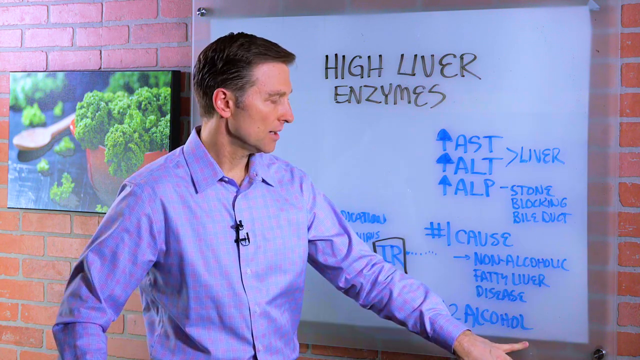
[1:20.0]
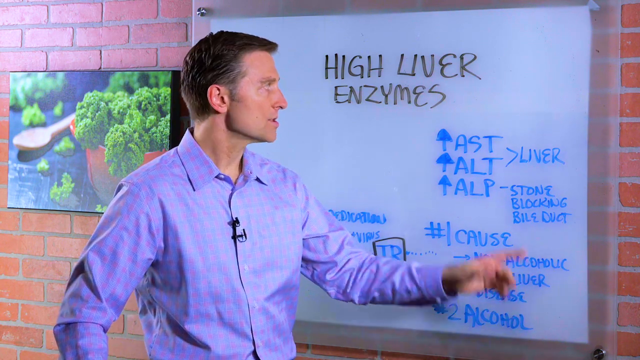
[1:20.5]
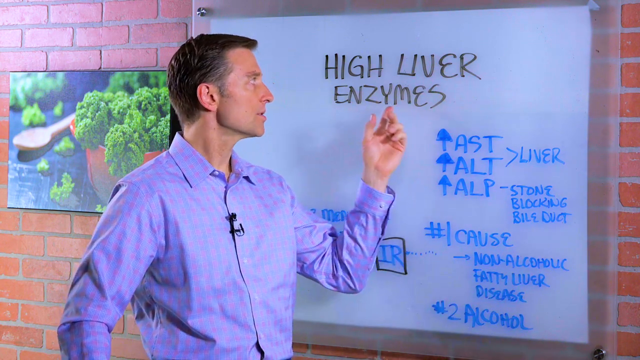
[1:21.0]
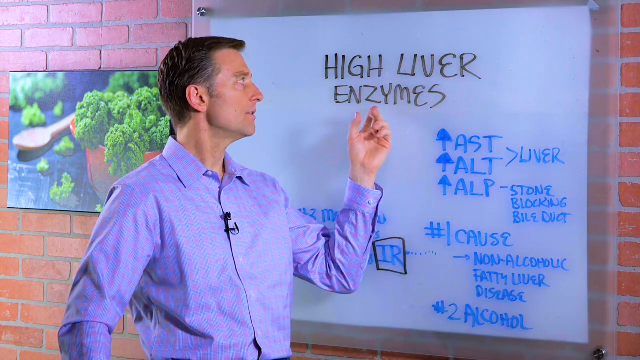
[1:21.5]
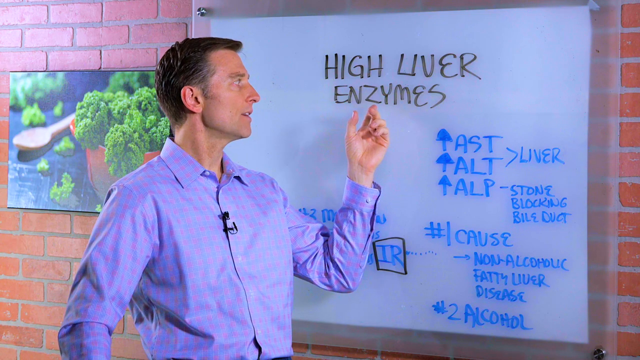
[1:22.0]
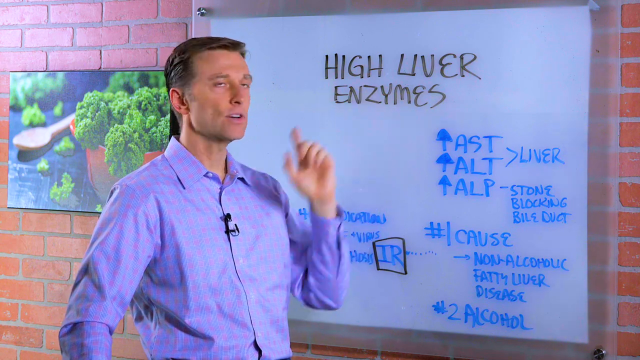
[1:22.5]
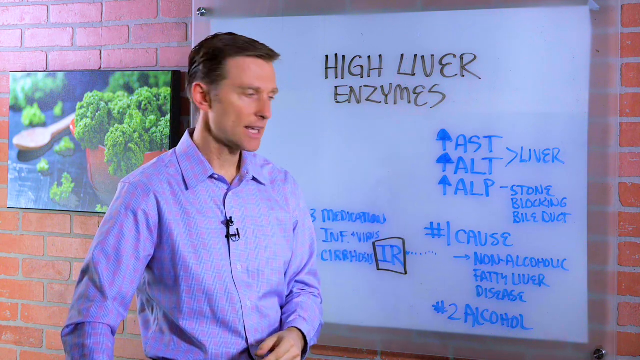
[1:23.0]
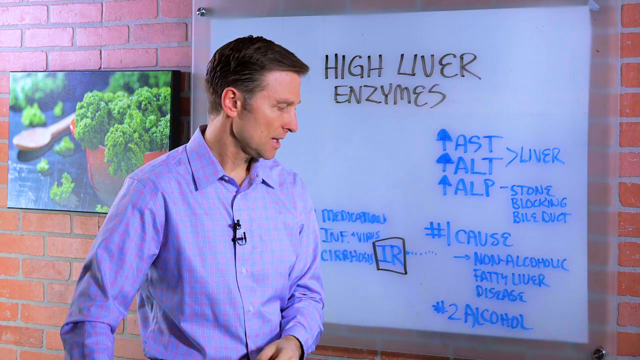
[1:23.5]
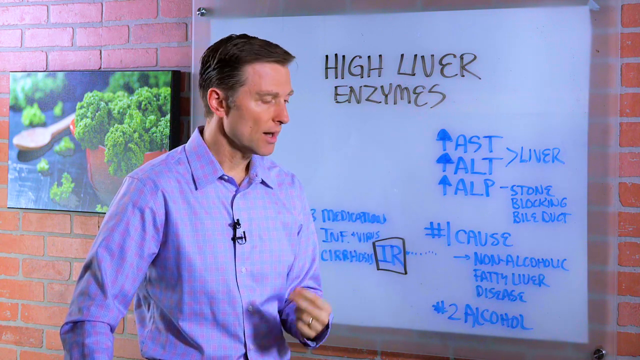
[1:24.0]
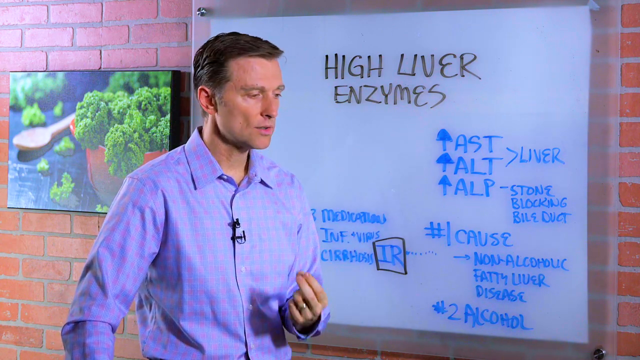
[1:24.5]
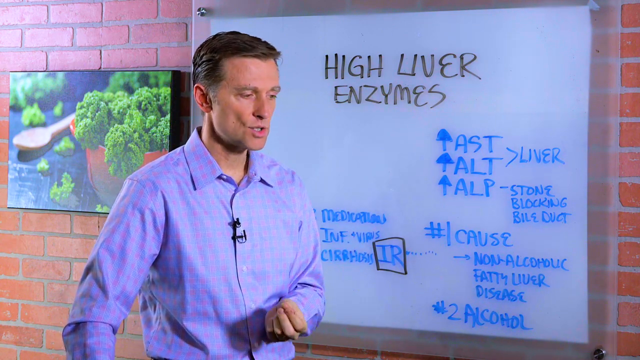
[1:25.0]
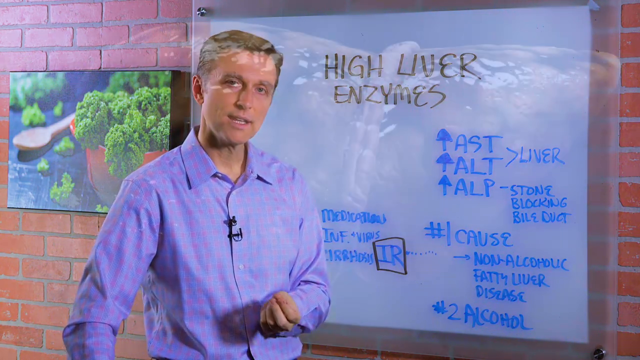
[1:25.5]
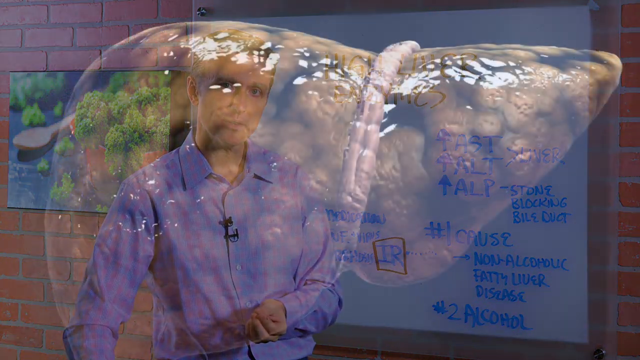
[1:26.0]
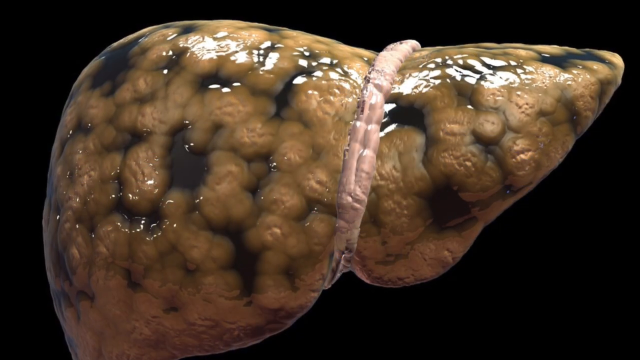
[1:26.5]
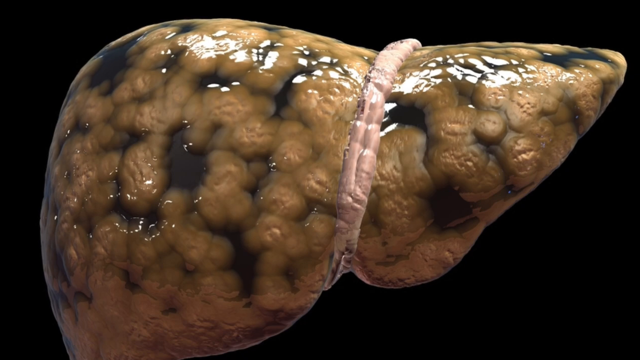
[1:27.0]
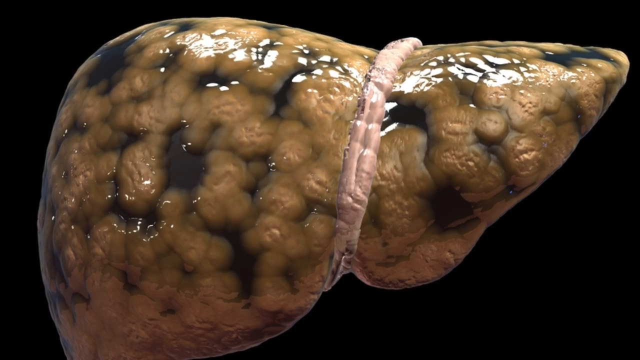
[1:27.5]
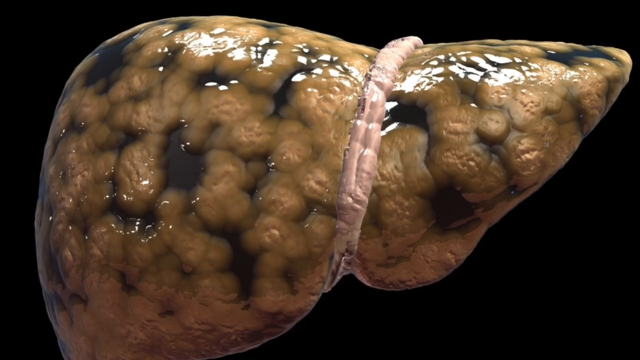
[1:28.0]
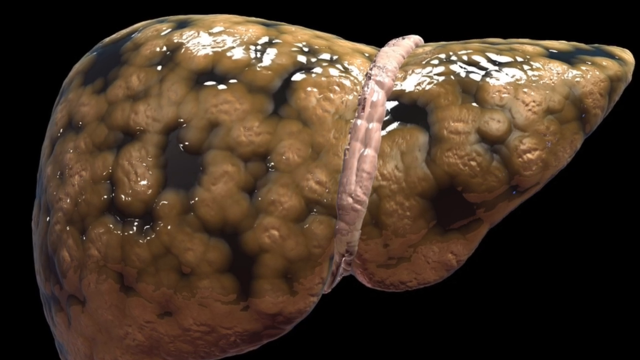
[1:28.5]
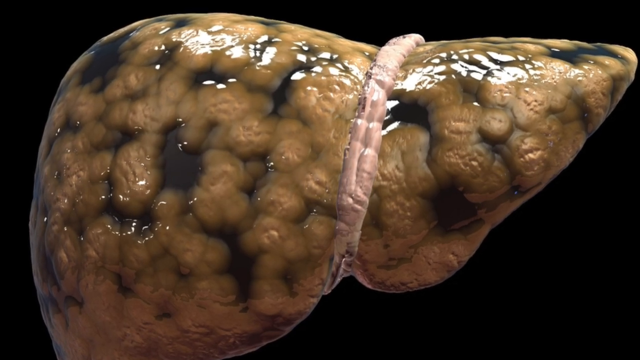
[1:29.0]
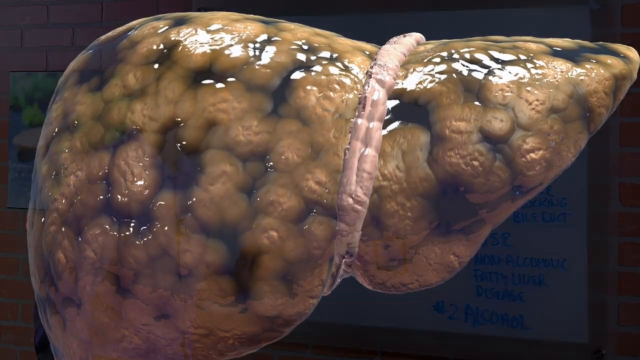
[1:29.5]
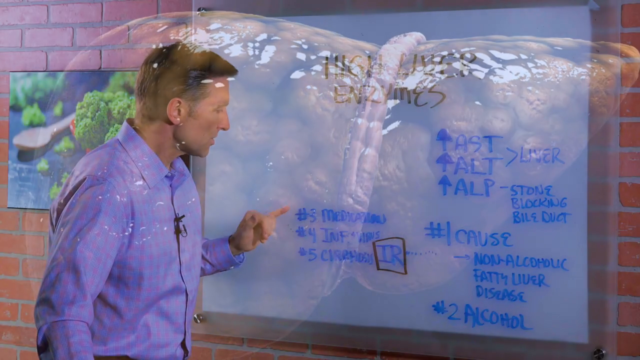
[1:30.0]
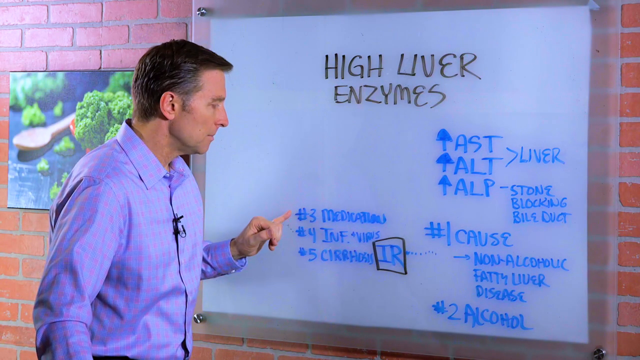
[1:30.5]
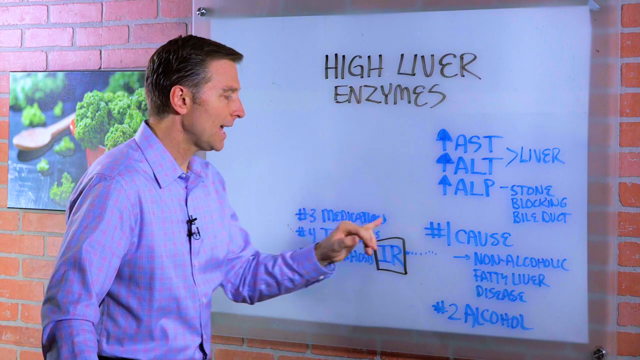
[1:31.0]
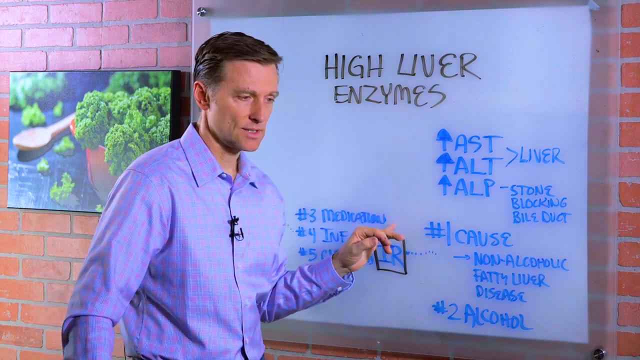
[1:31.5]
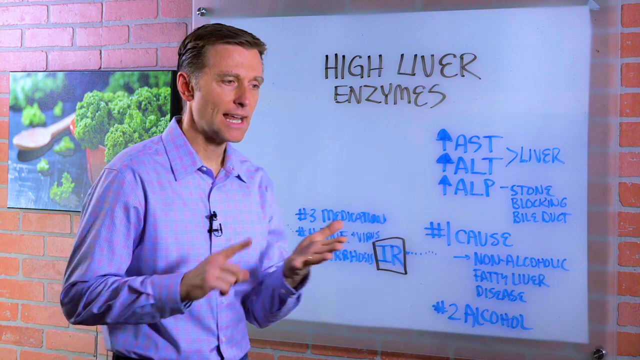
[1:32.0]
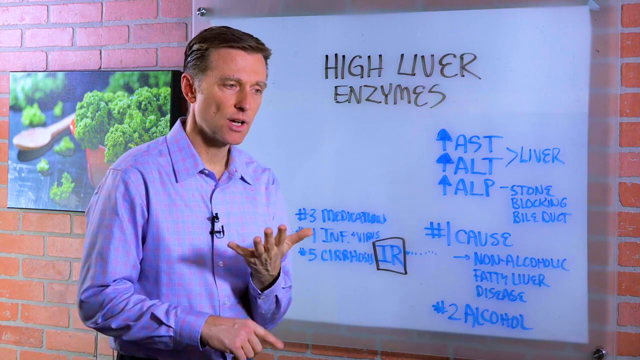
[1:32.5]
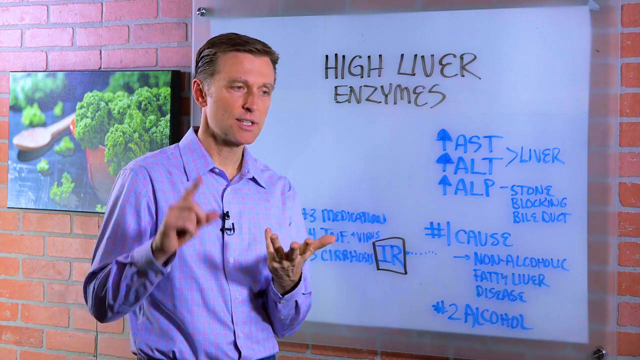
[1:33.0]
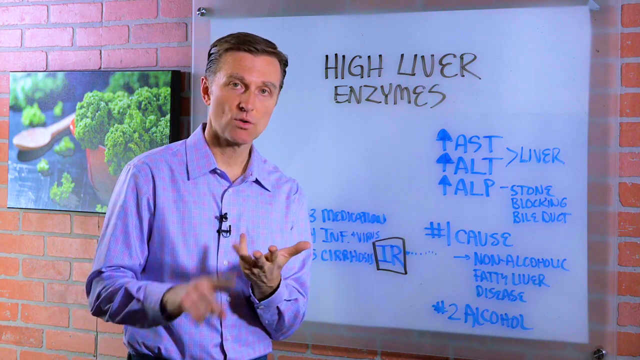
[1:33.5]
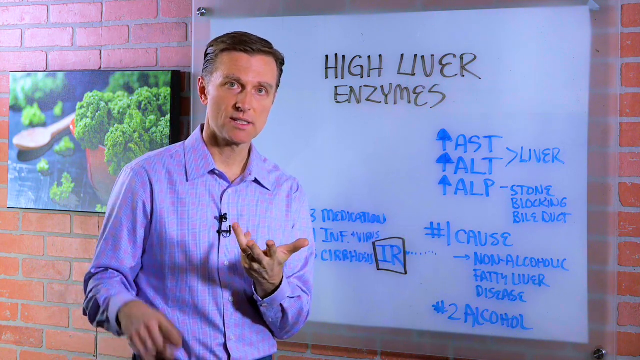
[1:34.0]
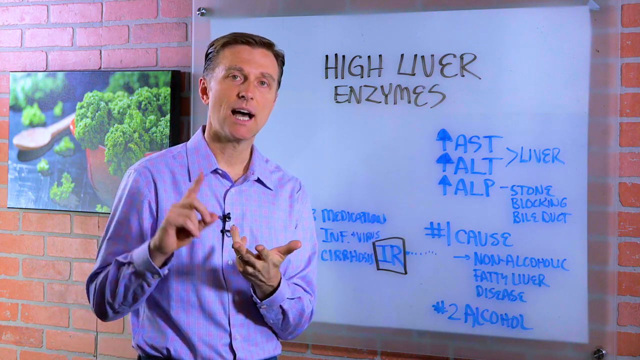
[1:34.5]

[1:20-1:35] The man speaks, points to "high liver enzymes" and cups his hand. A picture of a black and brown liver appears, then the camera comes back to the man, who counts with his fingers. He uses his pinky finger to point at "number three" and points to "medications," counting off from his small finger to his third finger. A picture of a liver that looks like it has a rope around it is shown several times between shots of the man. The man has short hair. He keeps pointing to "high liver enzymes" and "number three medications," counting on his fingers, and at one point looks down.